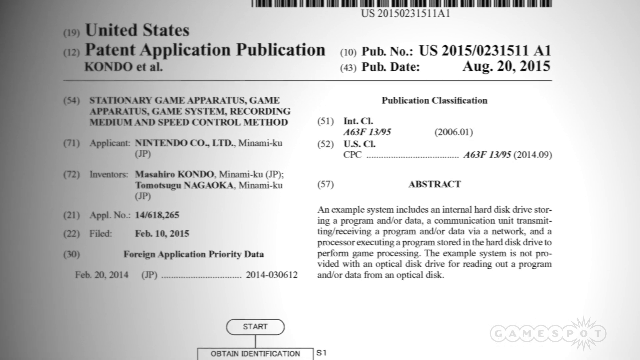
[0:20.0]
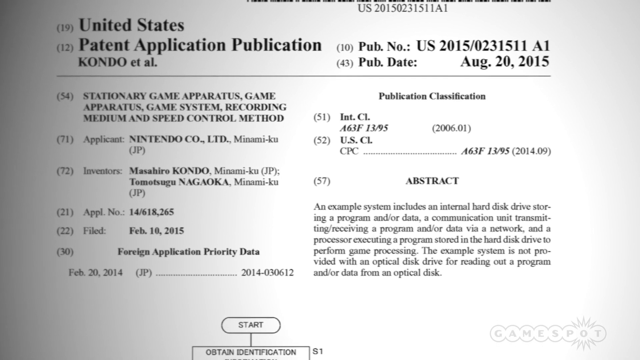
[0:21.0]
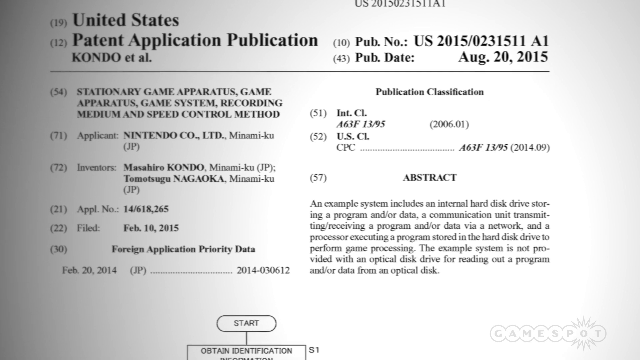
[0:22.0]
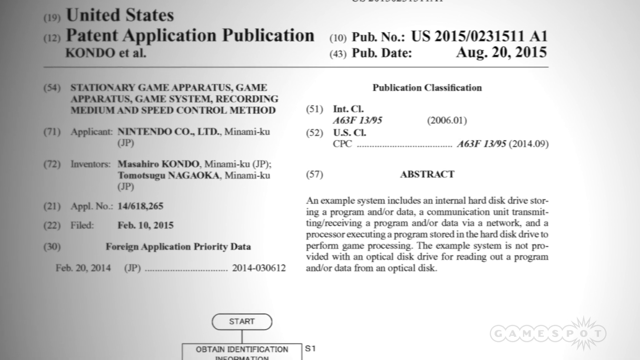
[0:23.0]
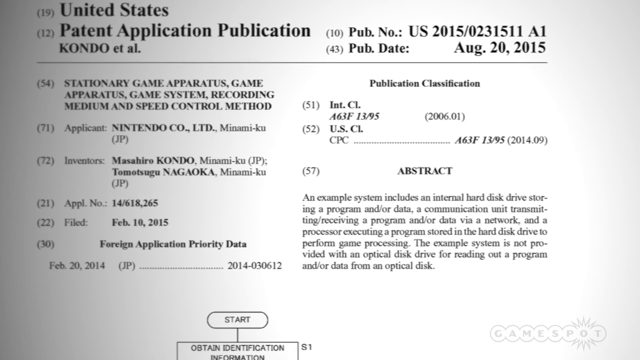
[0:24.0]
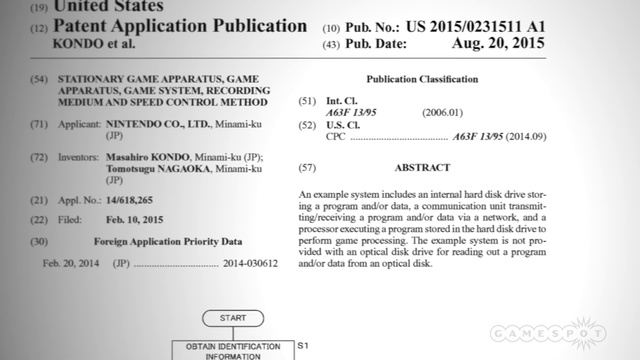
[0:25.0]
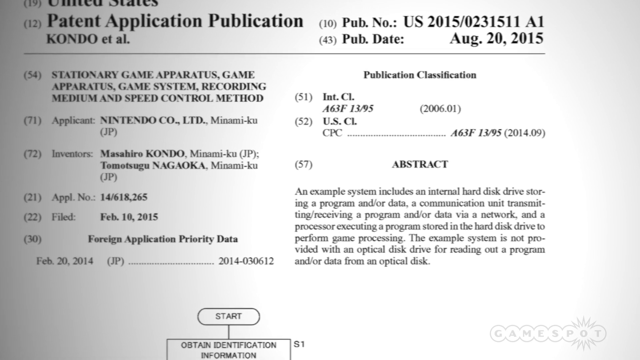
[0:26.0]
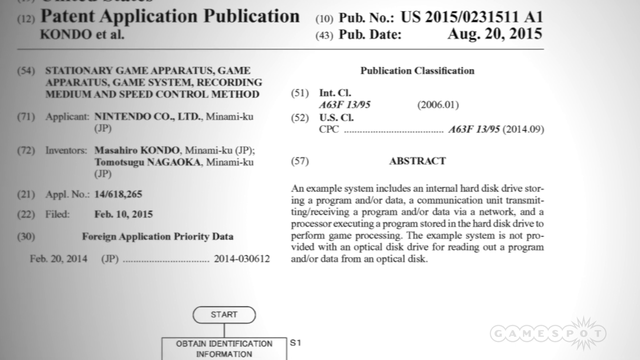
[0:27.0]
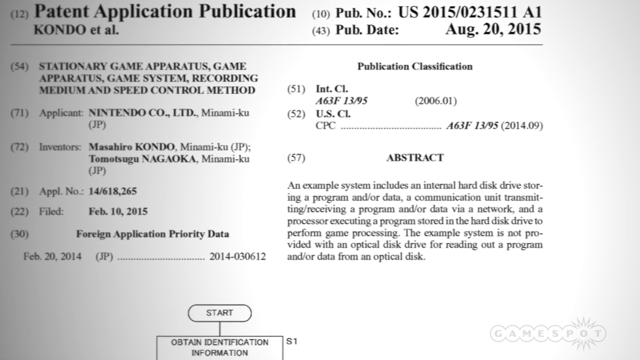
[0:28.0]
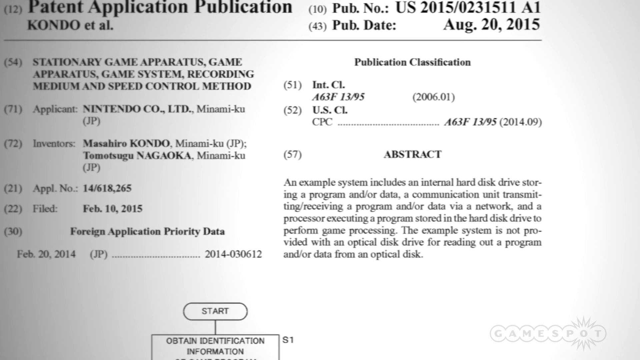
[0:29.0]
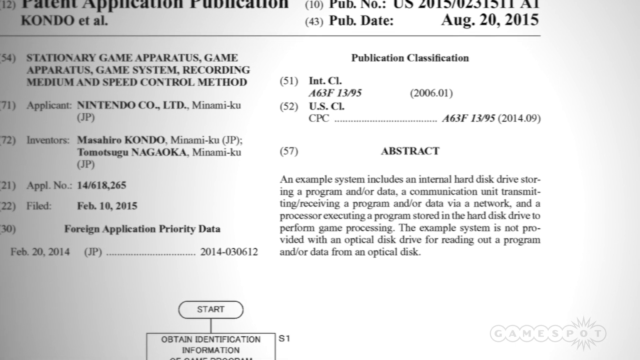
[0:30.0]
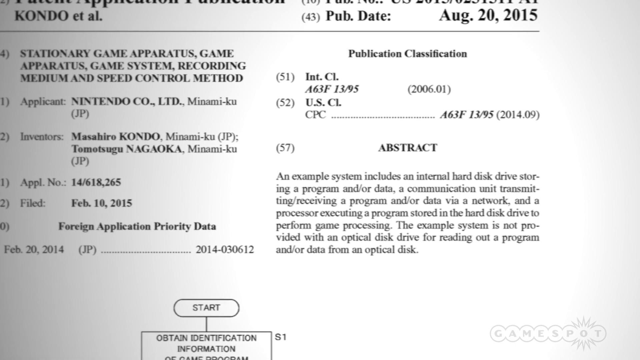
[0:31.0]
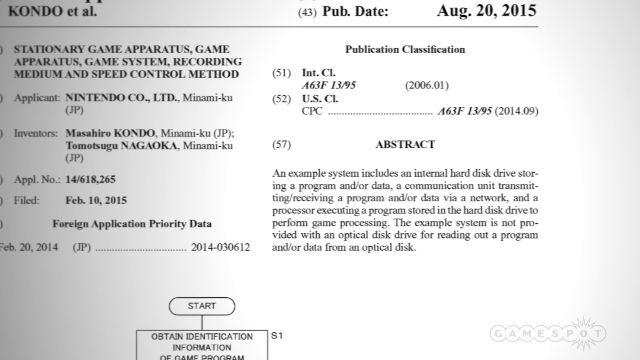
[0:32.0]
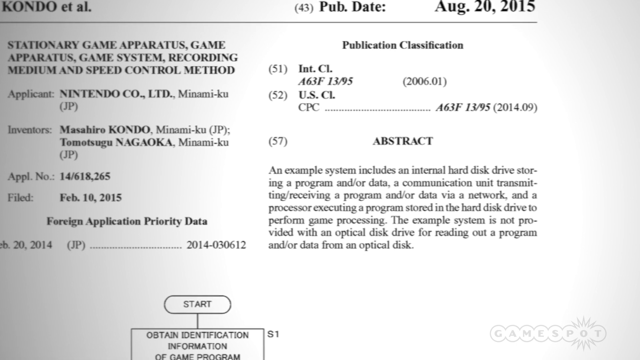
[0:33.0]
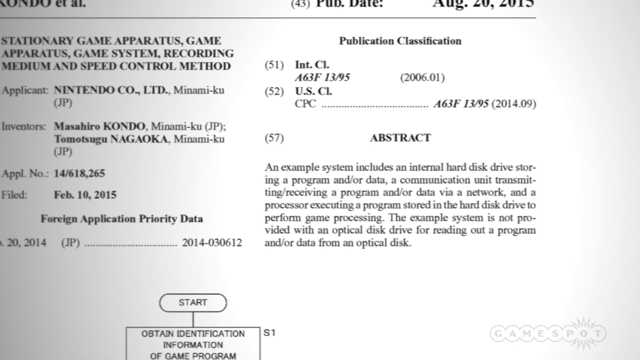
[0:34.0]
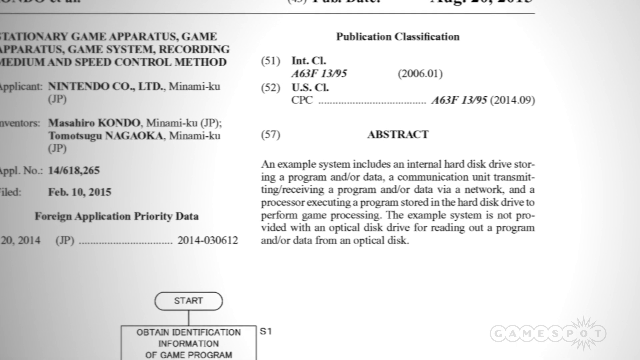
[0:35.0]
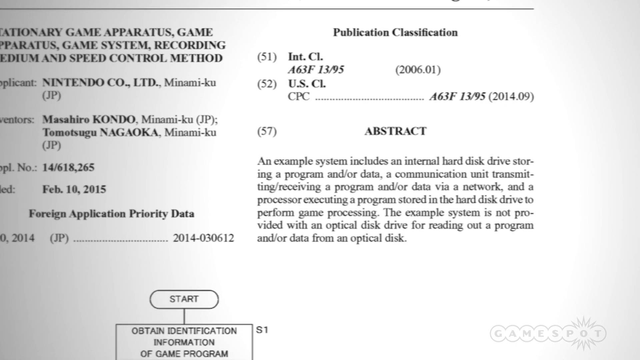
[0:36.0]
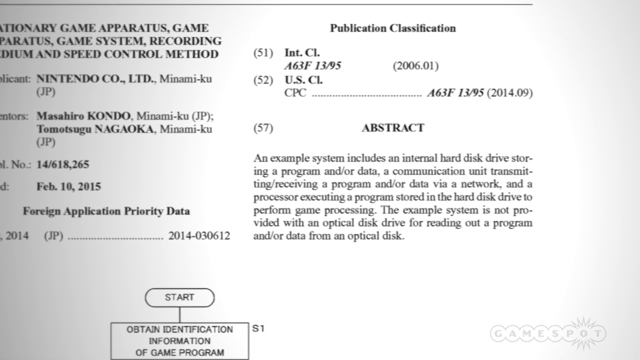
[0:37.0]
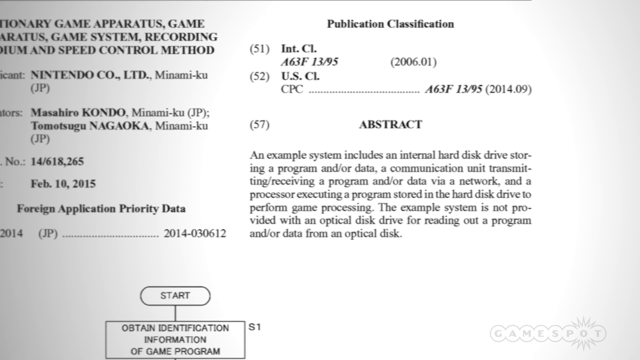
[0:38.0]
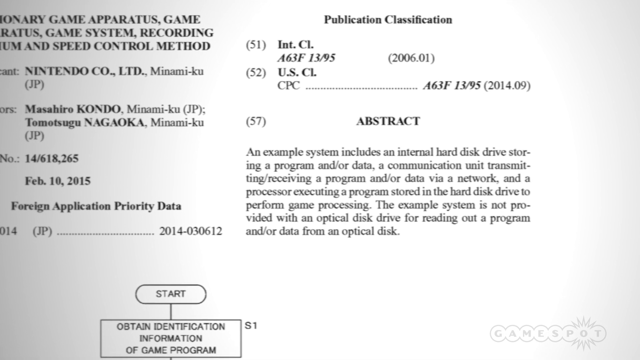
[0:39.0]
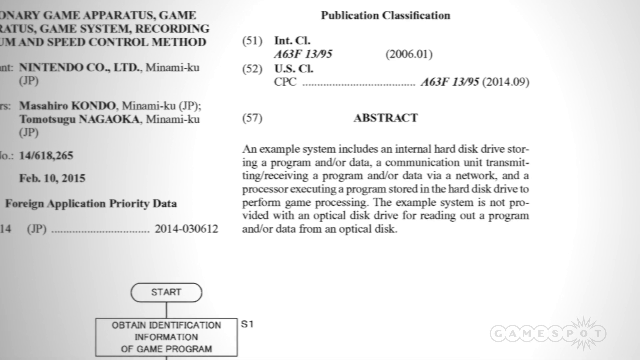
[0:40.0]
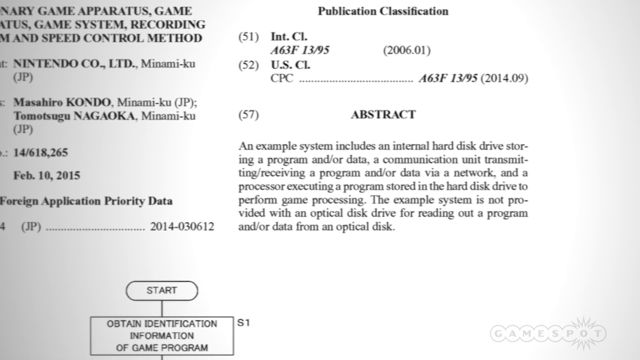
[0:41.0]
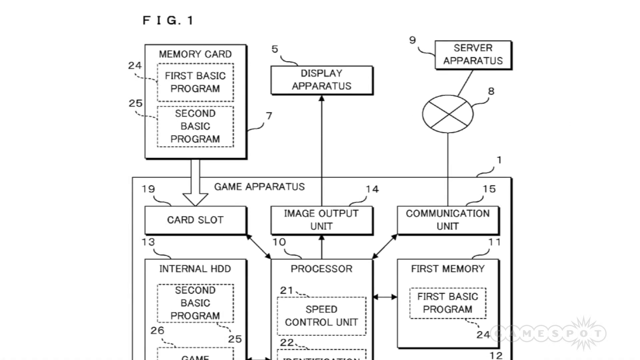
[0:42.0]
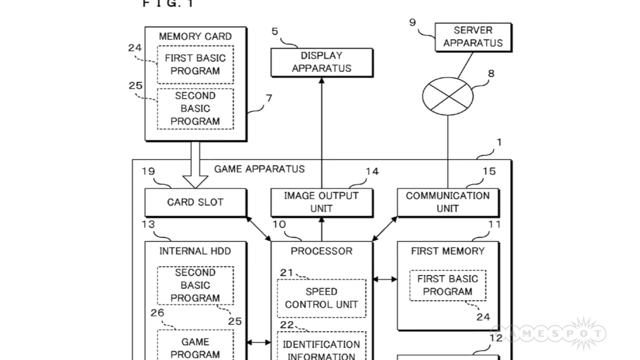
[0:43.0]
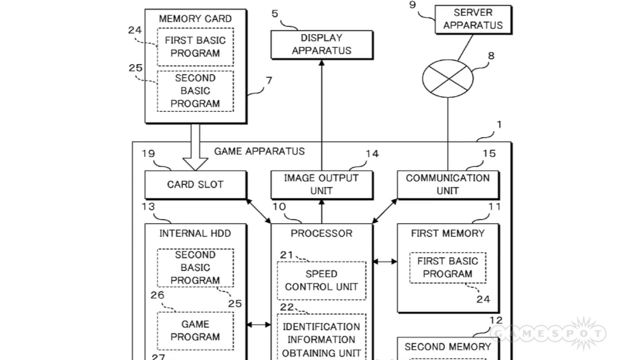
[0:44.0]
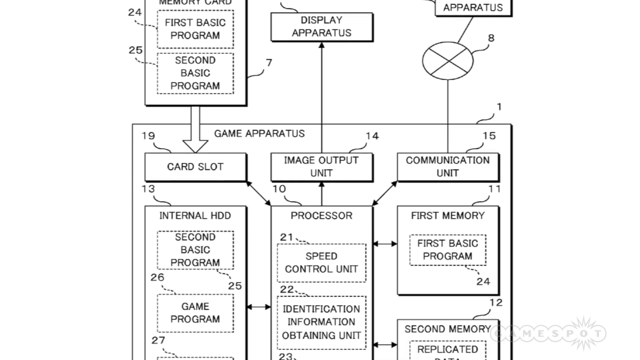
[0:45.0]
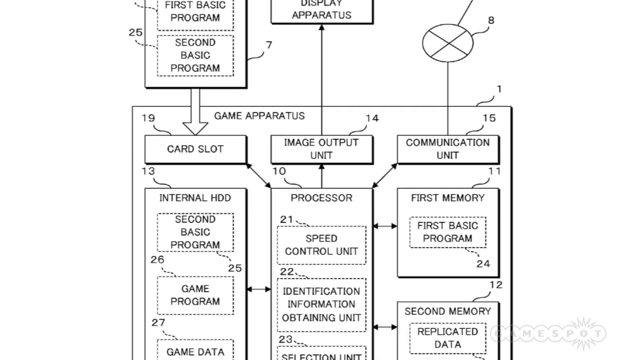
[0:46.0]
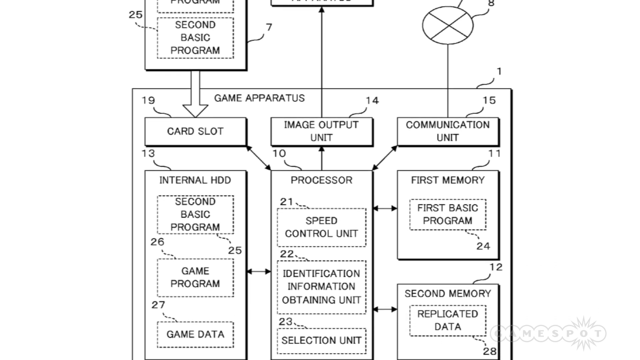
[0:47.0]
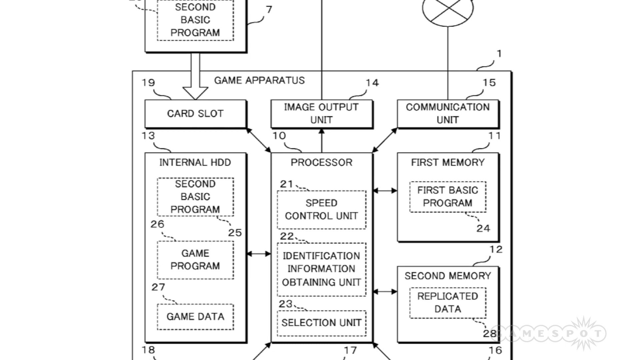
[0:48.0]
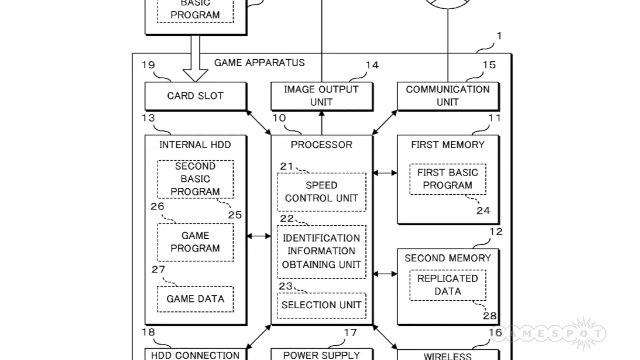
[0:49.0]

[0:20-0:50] The video zooms in on the abstract of the application, a short paragraph that reads "an example system includes an internal hard disk drive storing a program and or data, a communication unit transmitting, receiving a program and or data via a network, and a processor executing a program stored in the hard disk drive to perform game processing. The example system is not provided with an optical disk drive for reading out a program and or data from the optical disk." As it zooms into the paragraph, a diagram labeled "Figure 1" is shown. The video zooms down the diagram, which is almost like a flowchart, showing the card slot, the output, the layout of what the component would look like, and its core functions. The external elements in the diagram are the memory card that would go in, the display apparatus, and the server apparatus. The diagram is mostly squares, rectangular boxes and arrows, with squiggly, wavy lines that are numbered to indicate the legend. It does not look very complicated, and the terms used are fairly standard, such as "second memory data replication"; it does not look like a highly technical diagram or description.